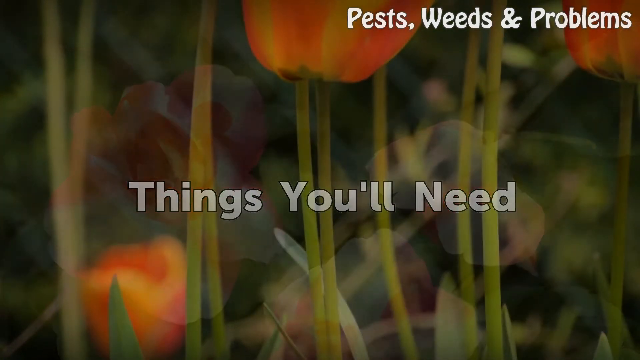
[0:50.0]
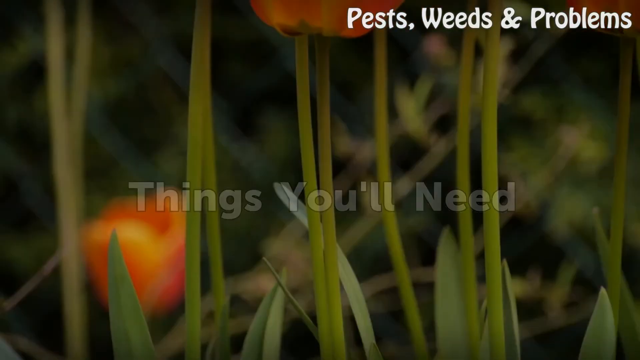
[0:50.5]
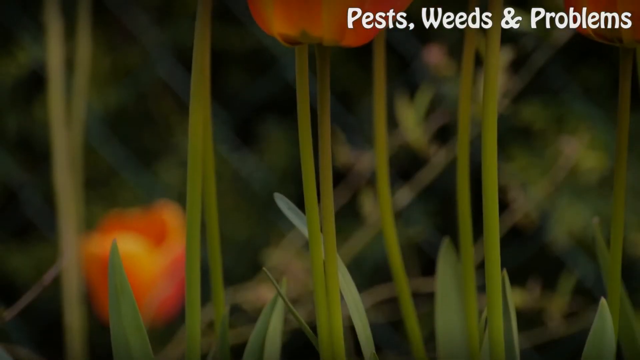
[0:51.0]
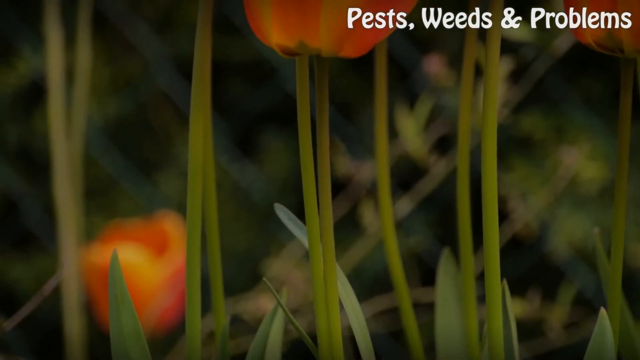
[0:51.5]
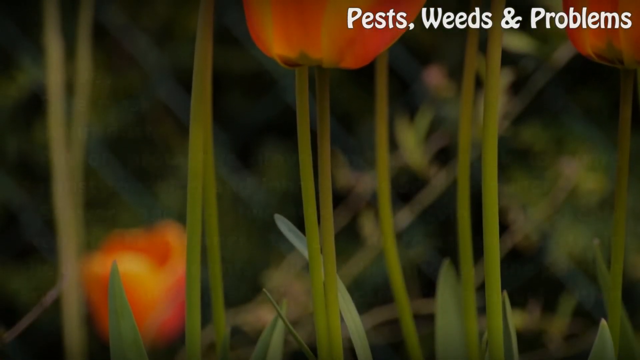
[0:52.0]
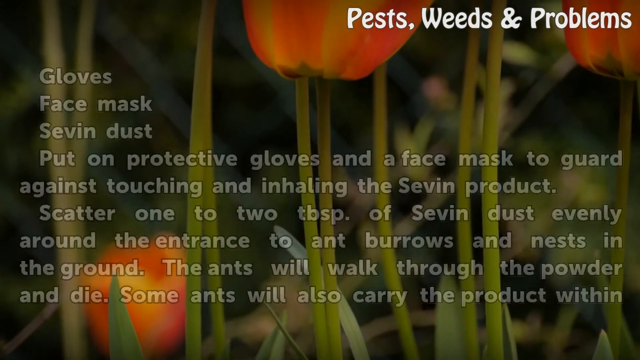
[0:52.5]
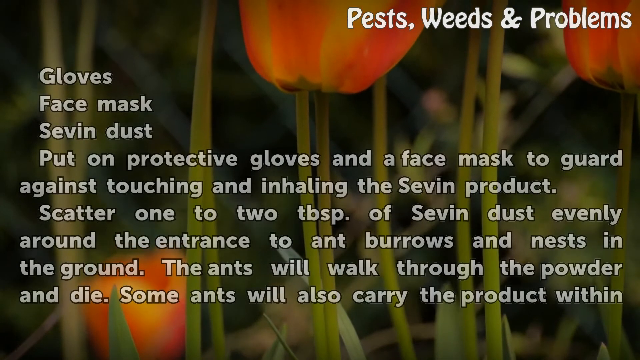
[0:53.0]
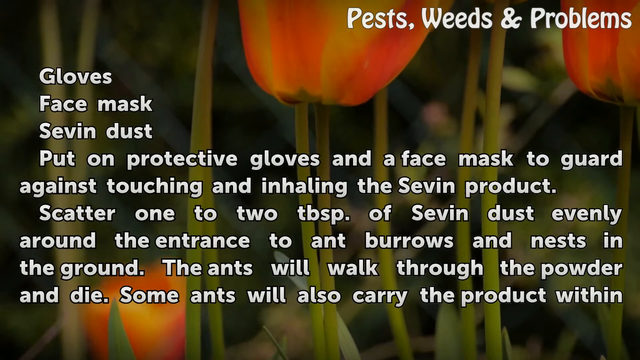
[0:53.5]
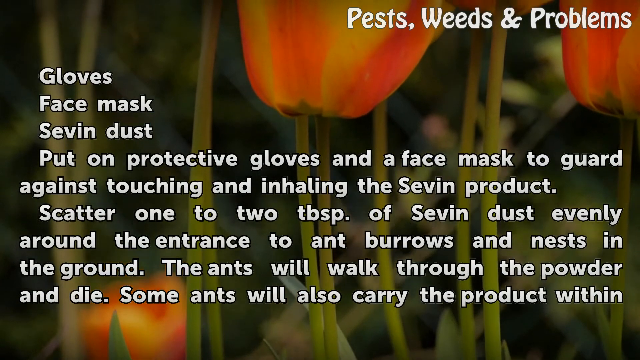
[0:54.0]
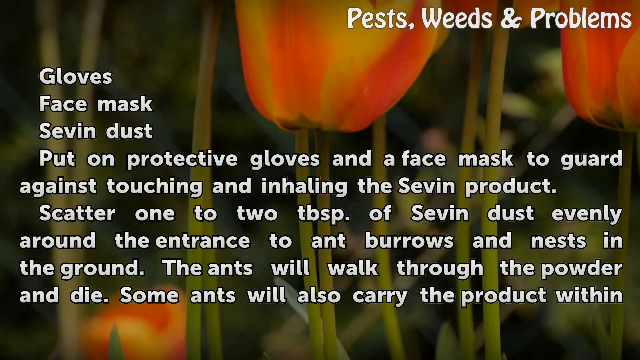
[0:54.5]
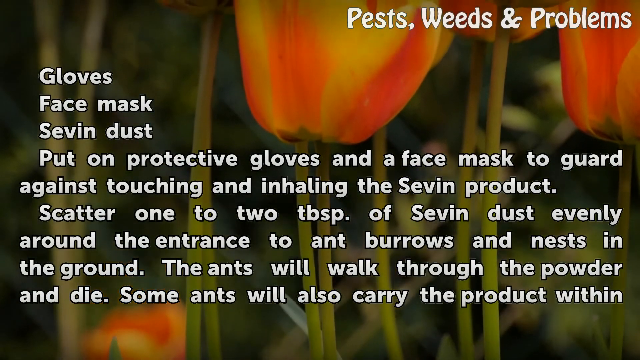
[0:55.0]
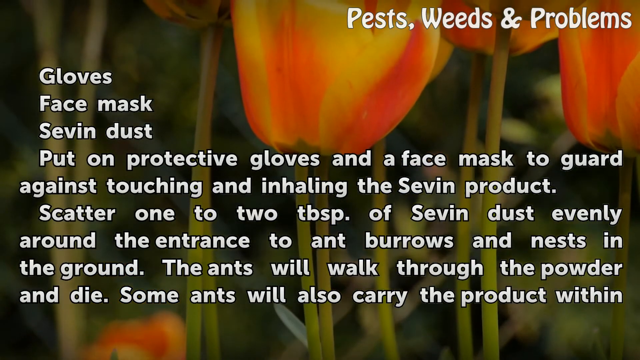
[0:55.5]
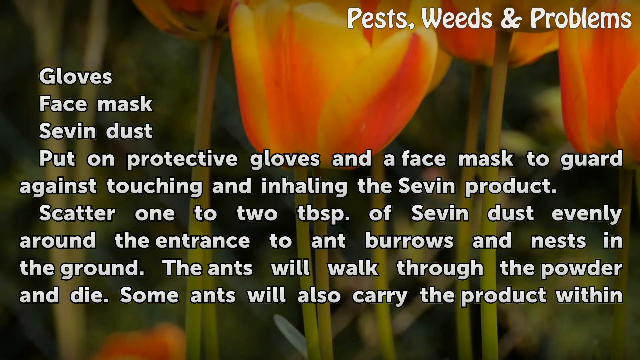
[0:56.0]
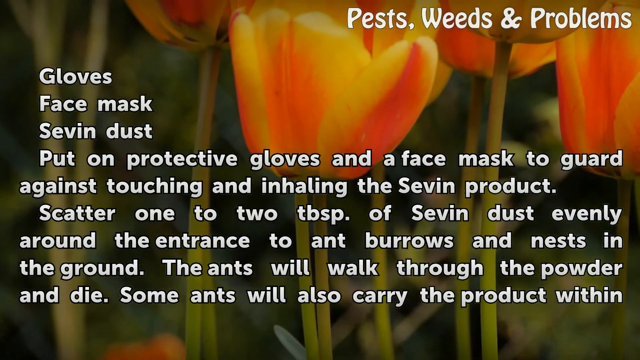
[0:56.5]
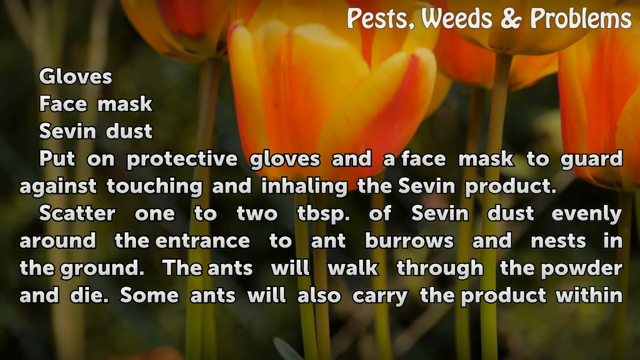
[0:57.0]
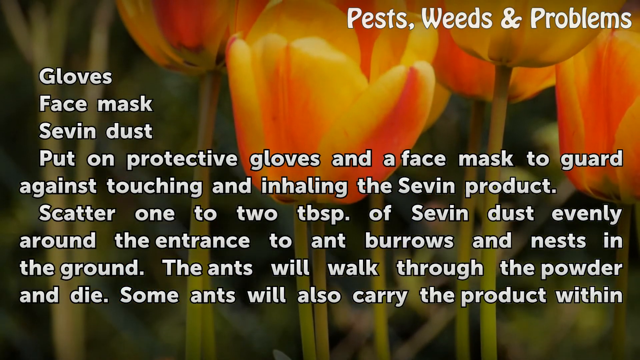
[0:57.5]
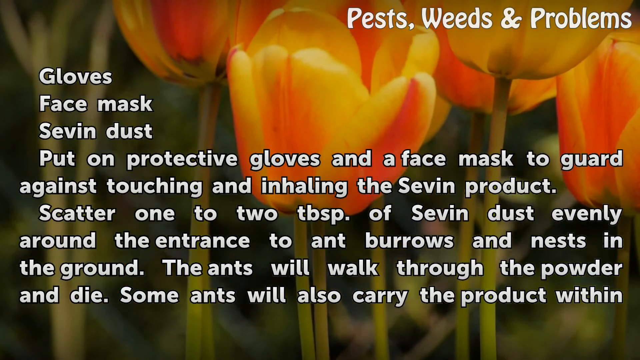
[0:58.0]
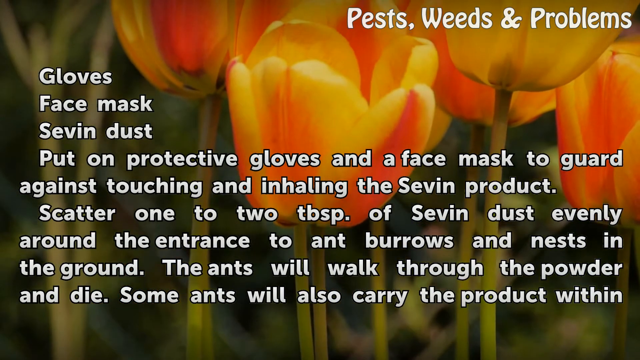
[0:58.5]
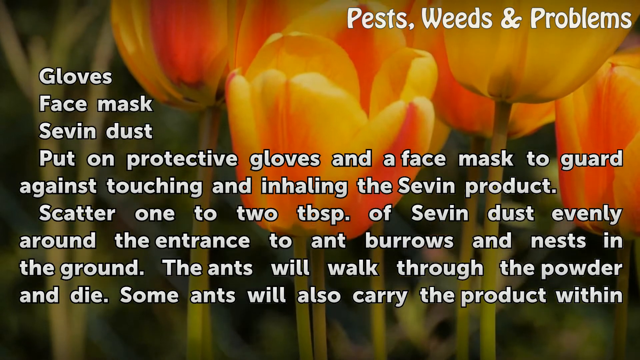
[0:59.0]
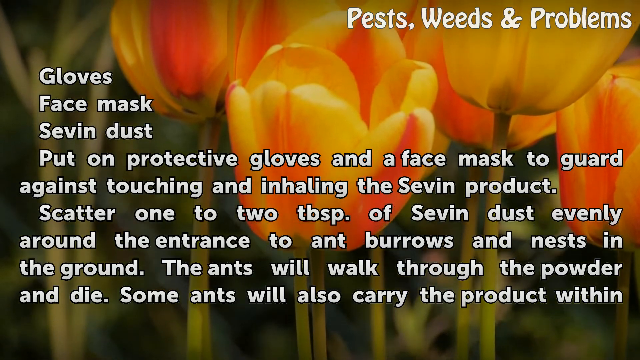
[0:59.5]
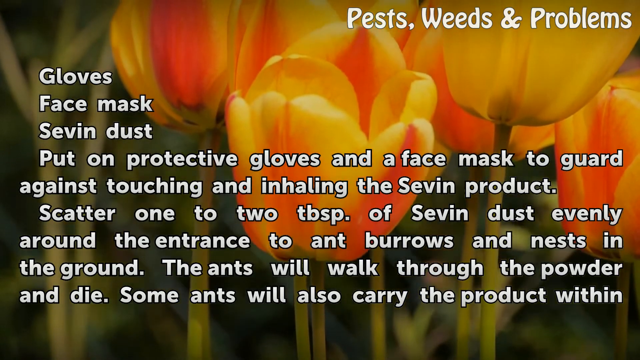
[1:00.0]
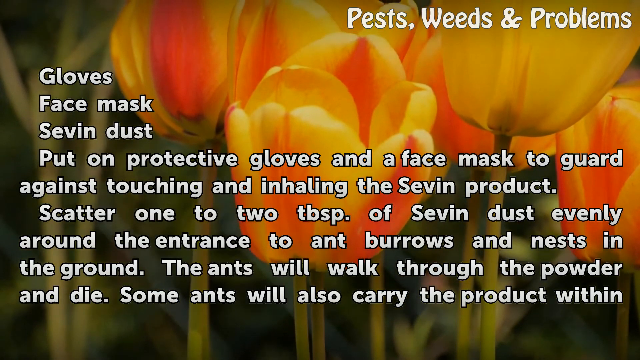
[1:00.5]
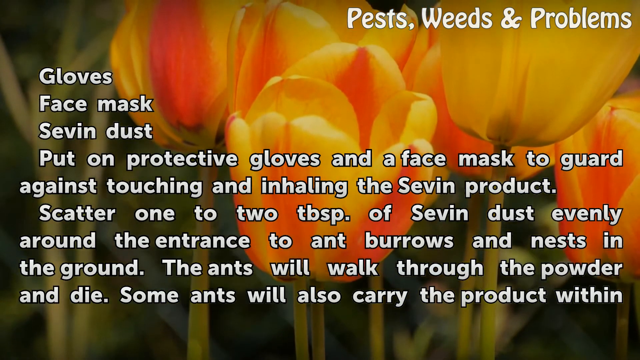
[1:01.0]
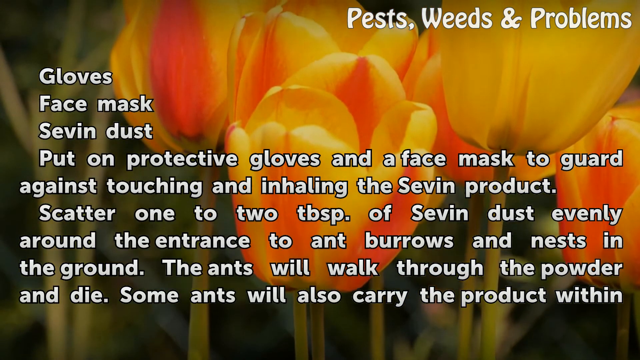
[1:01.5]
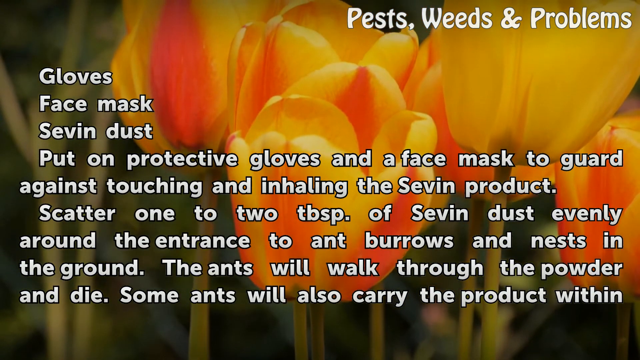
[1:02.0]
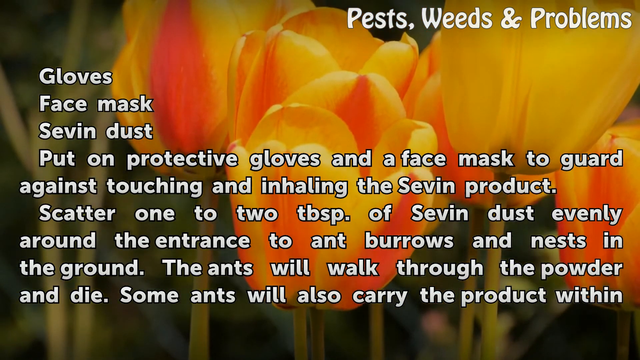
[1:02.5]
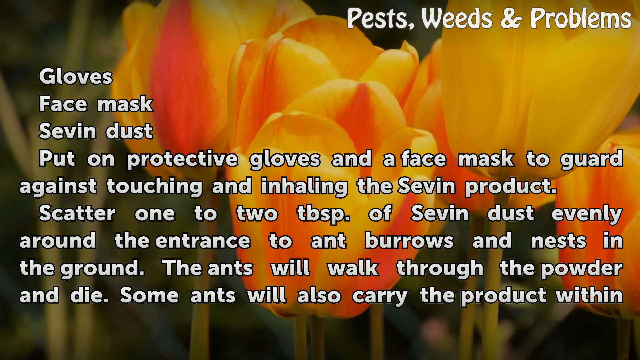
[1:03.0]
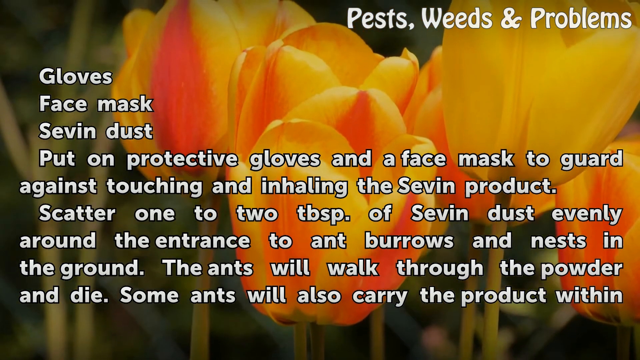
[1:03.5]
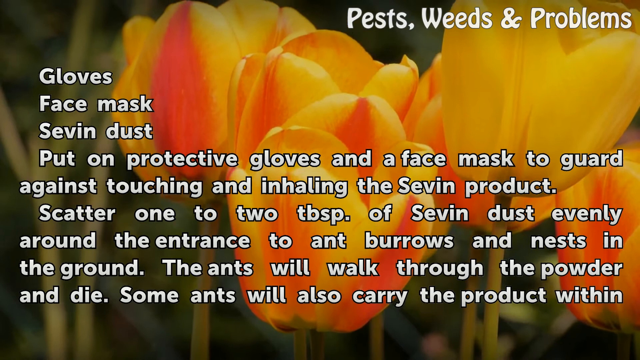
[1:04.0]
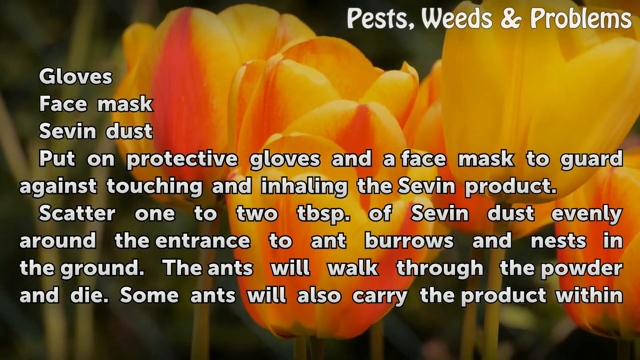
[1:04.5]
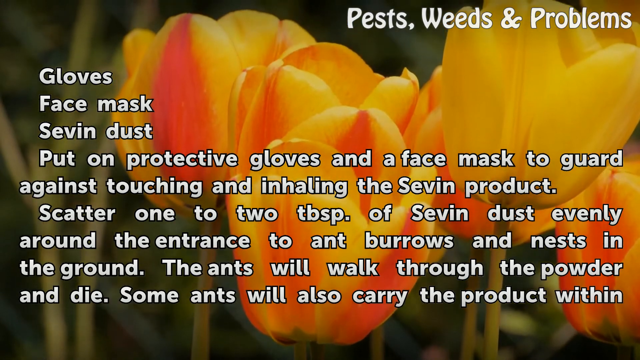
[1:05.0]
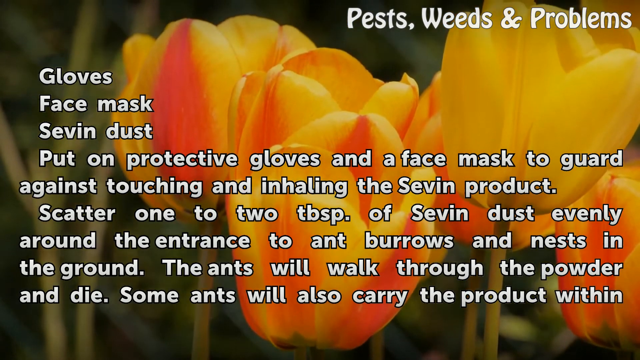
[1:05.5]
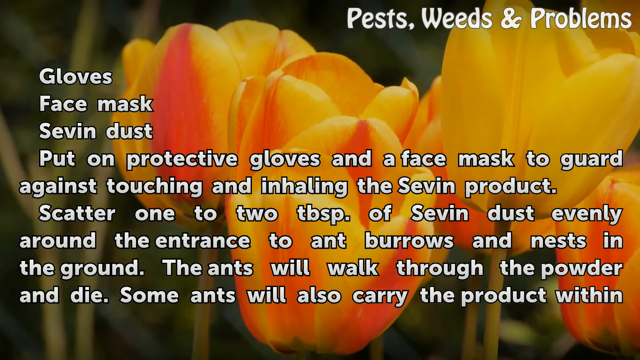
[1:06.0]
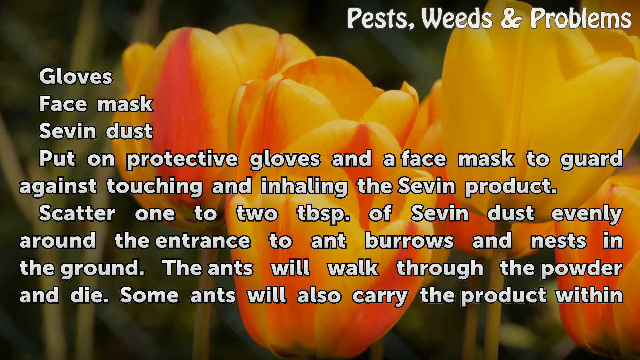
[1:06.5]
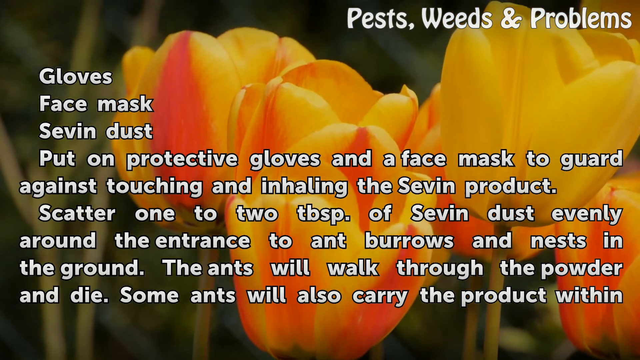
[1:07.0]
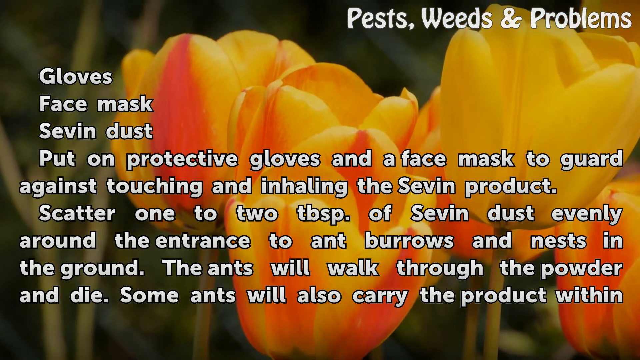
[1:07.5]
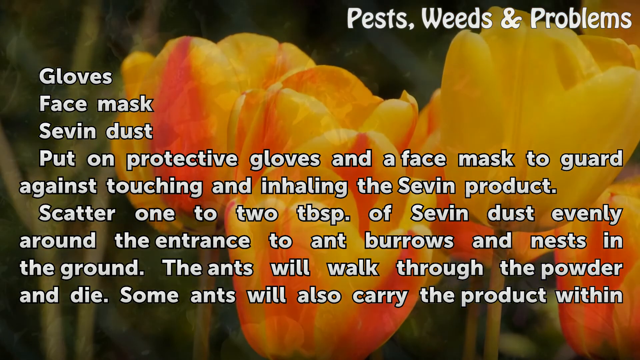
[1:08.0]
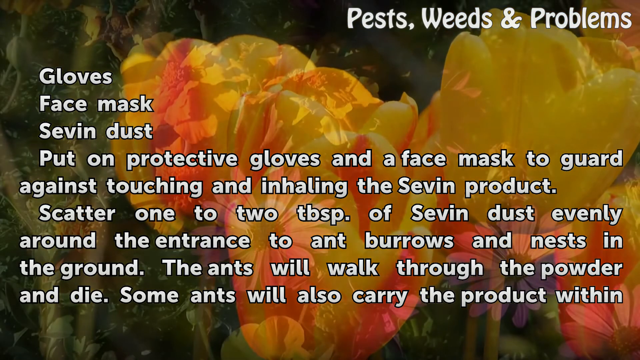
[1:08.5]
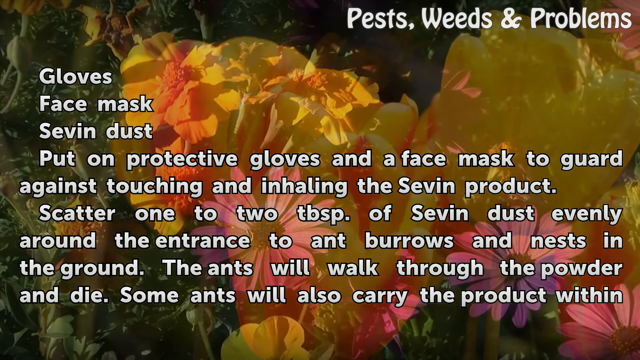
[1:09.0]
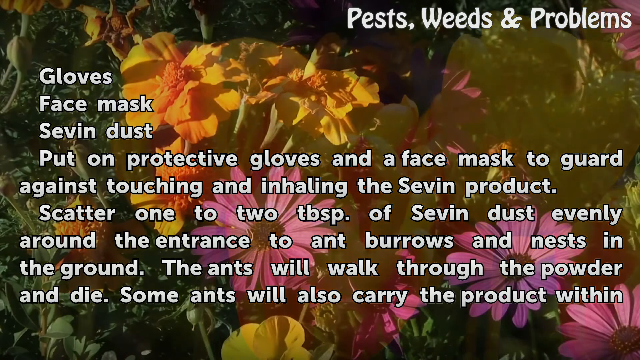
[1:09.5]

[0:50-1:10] Text appears over a background of flowers with yellow and orange petals, about a dozen of them, as the shot pans up towards them. The text lists items needed, such as "gloves", "face mask" and "SEVIN dust", and the instructions read: "put on protective gloves and a face mask to guard against touching and inhaling the SEVIN product. Scatter one to two tablespoons of SEVIN dust evenly around the entrance to ant burrows and nests in the ground. The ants will walk through the powder and die. Some ants will also carry the product within". The static text is overlaid on the slowly changing panning shot of the flowers, in which the flowers, leaves and petals are visible.